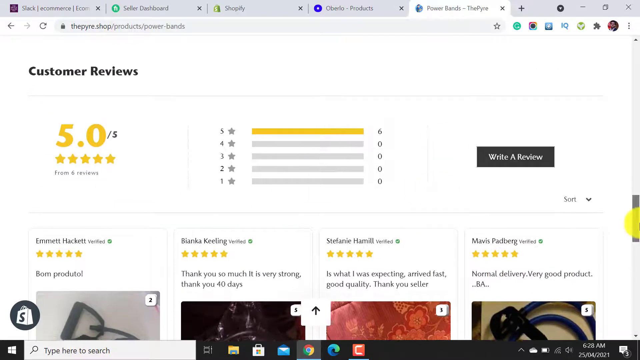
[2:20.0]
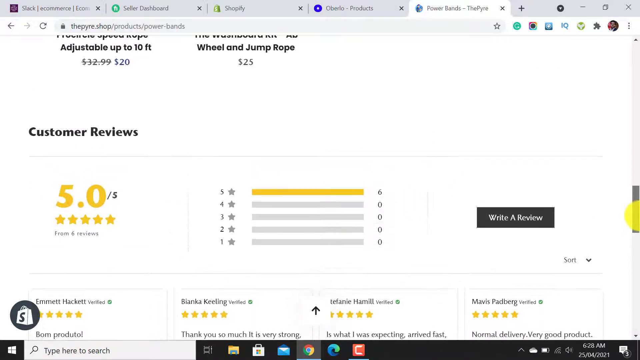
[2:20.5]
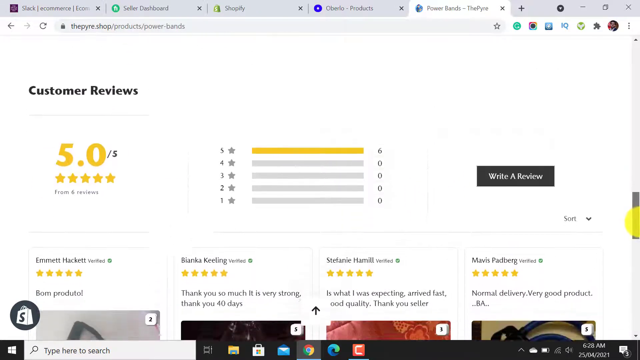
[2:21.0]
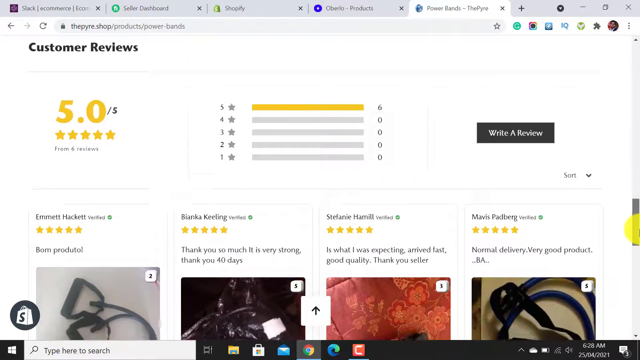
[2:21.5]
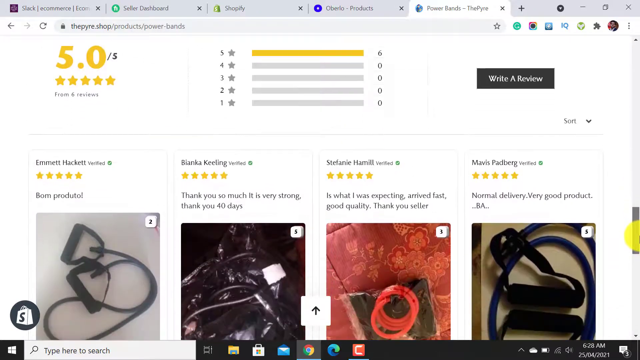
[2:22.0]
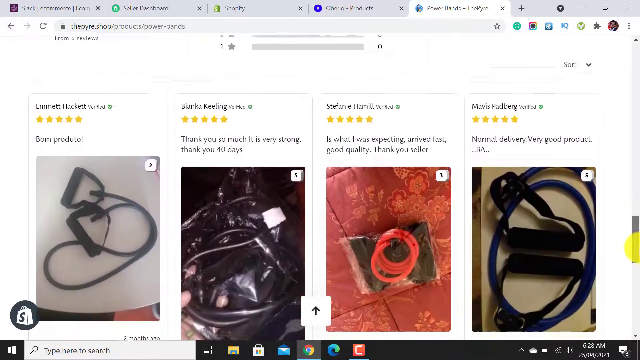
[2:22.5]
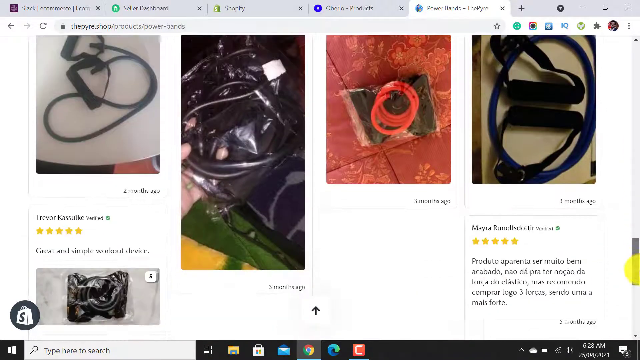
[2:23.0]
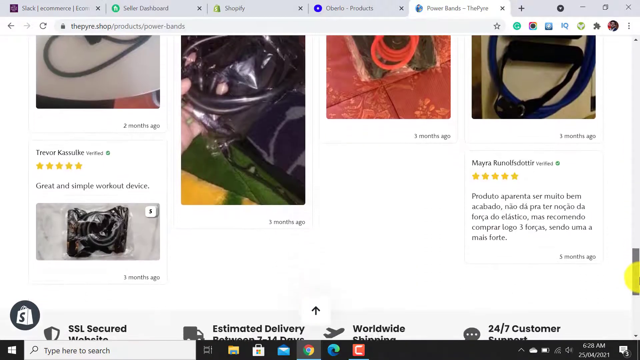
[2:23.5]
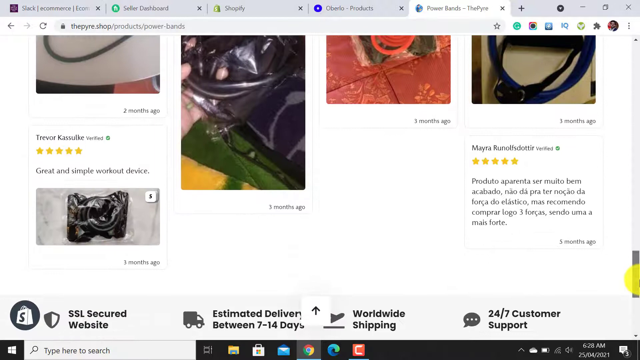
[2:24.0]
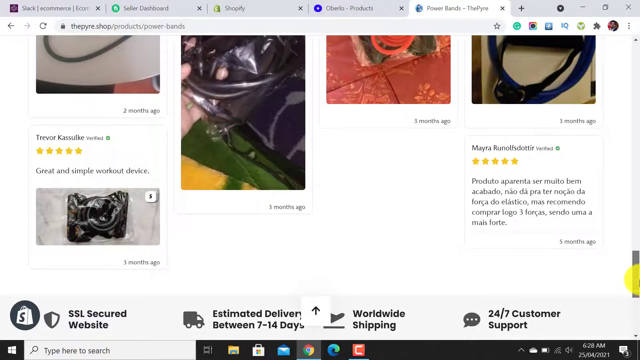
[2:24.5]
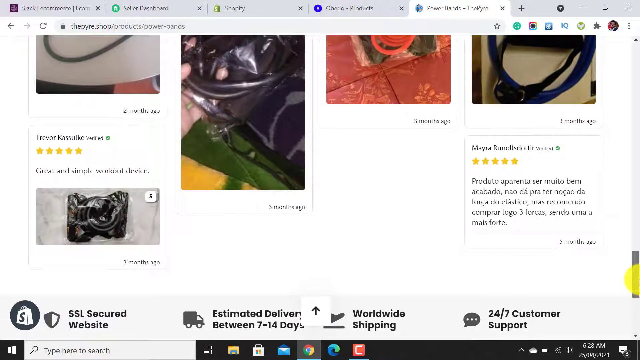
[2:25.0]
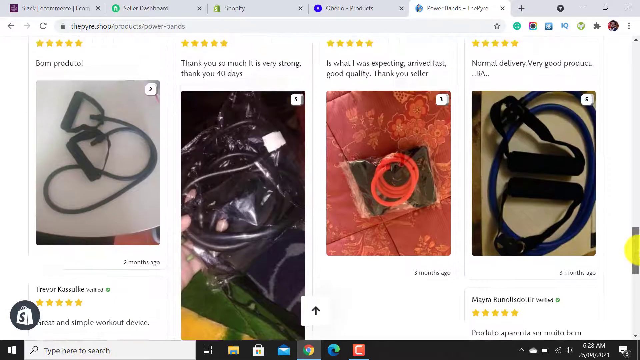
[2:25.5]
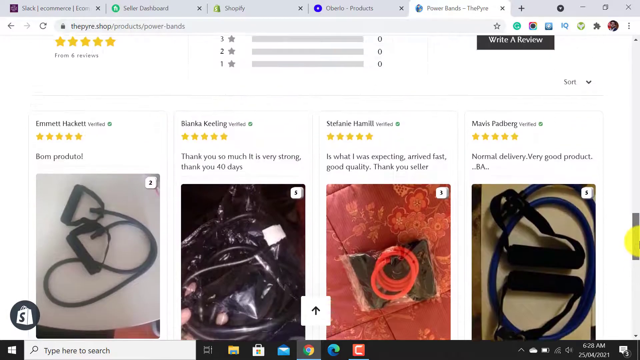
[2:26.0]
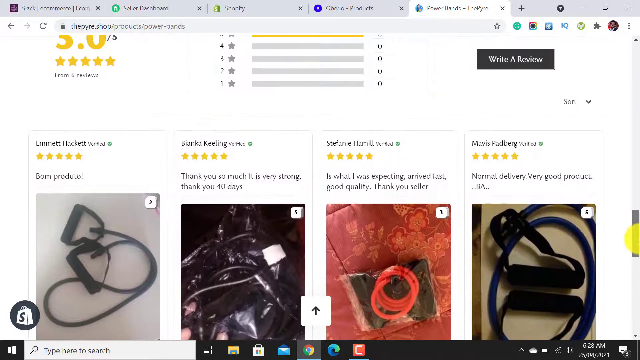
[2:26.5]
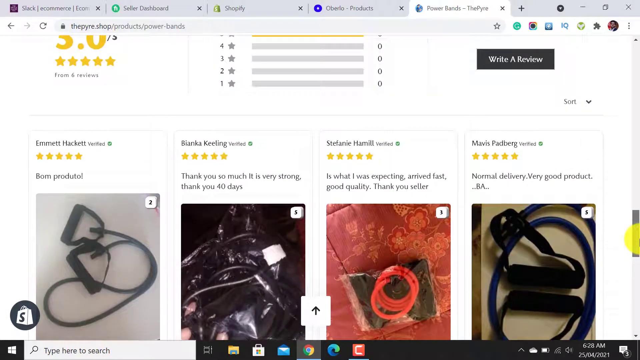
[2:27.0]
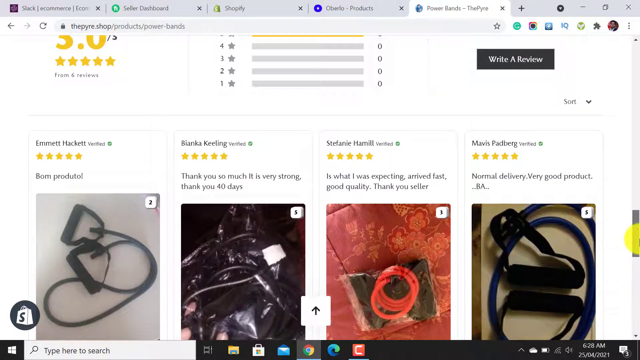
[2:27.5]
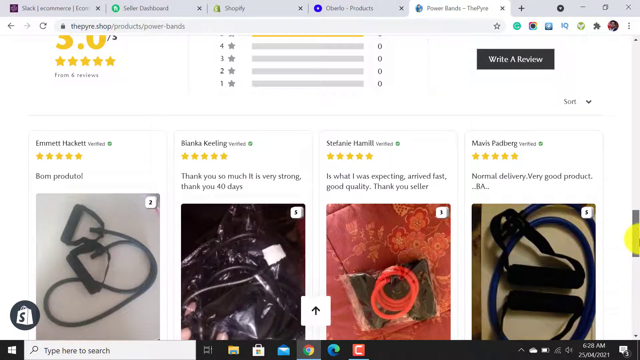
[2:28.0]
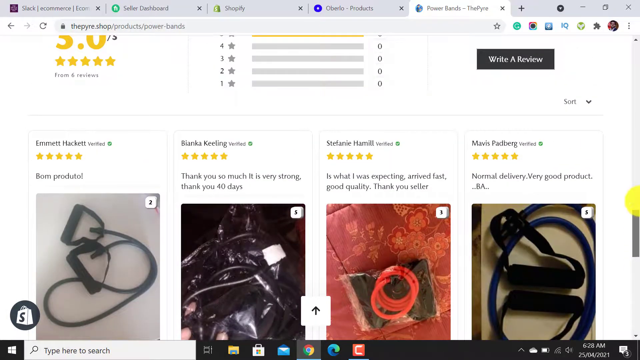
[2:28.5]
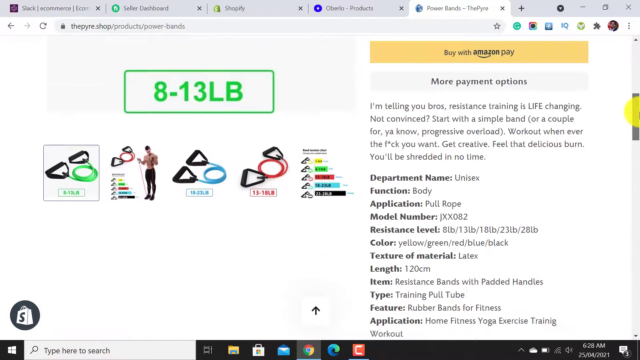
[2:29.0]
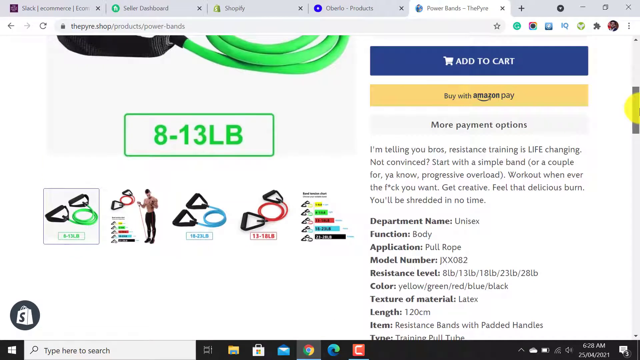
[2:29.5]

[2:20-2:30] The PowerBands page is shown and scrolled down, displaying the various imported products with five-star reviews, perhaps only those with five-star reviews as opposed to four-star ones. Five products are shown.